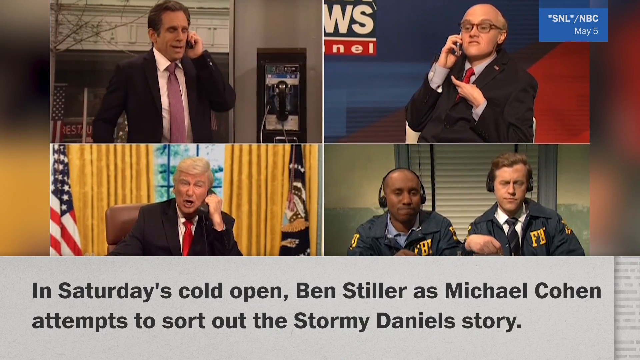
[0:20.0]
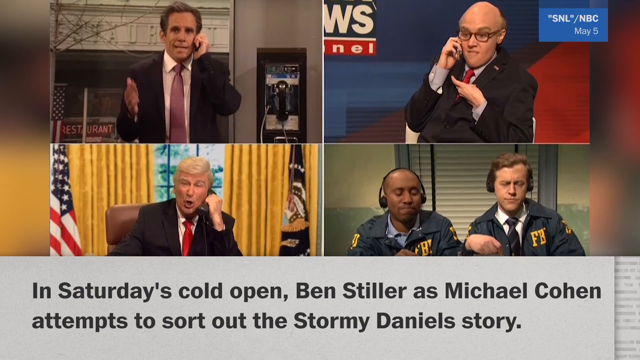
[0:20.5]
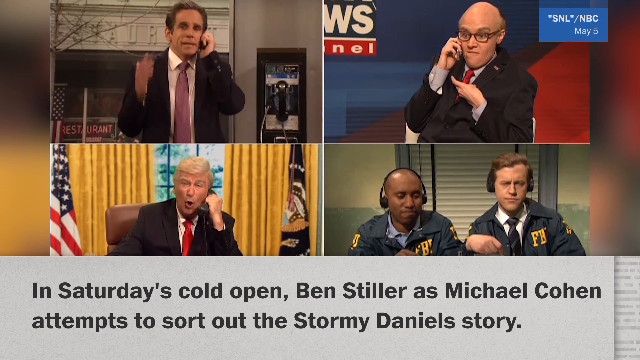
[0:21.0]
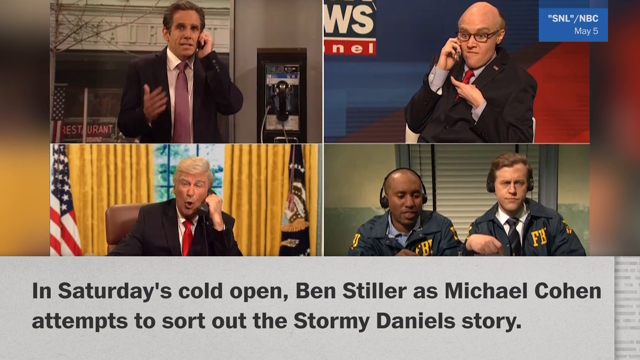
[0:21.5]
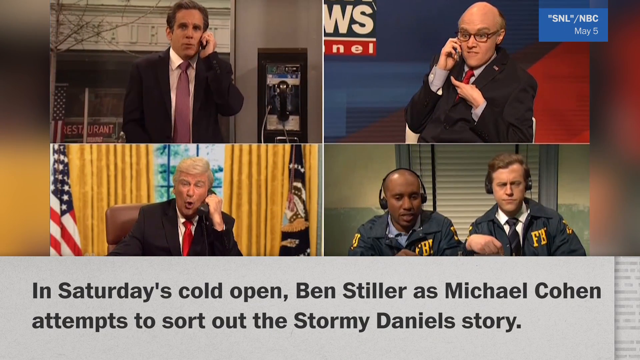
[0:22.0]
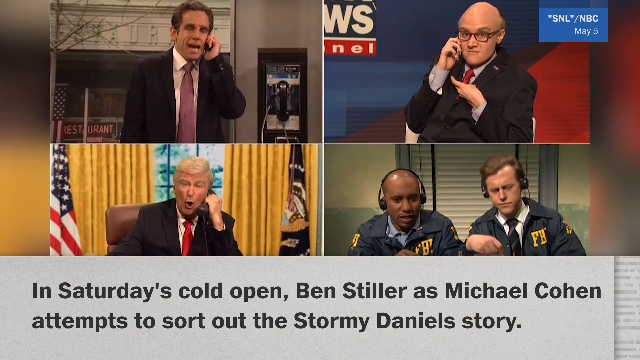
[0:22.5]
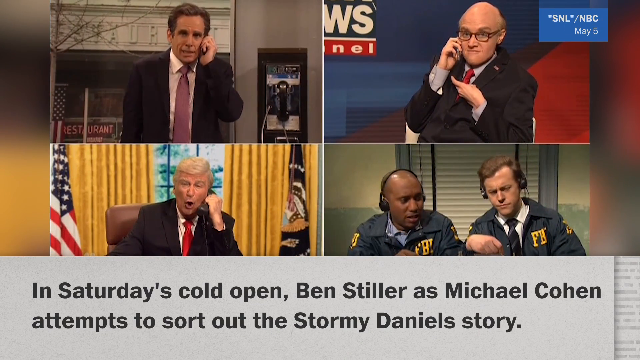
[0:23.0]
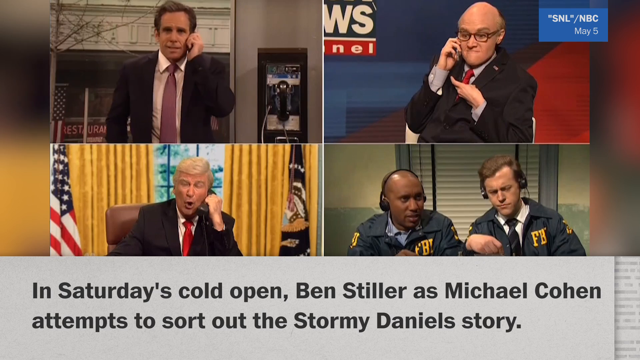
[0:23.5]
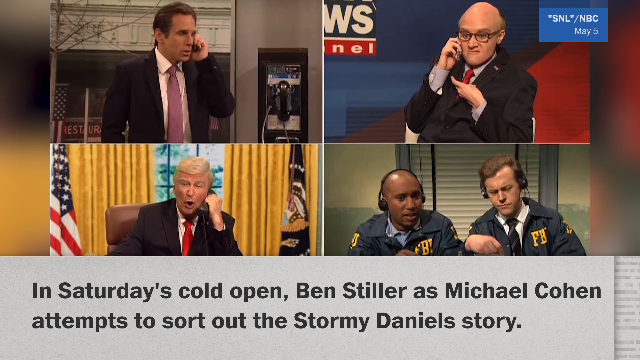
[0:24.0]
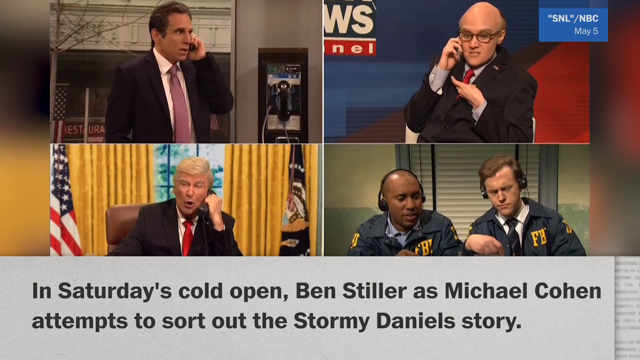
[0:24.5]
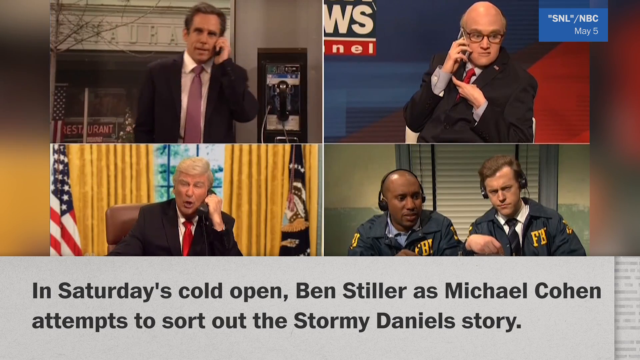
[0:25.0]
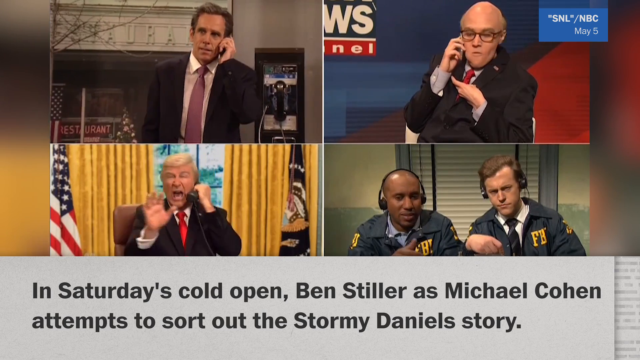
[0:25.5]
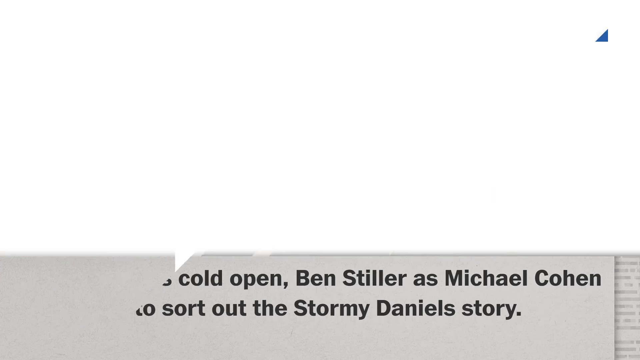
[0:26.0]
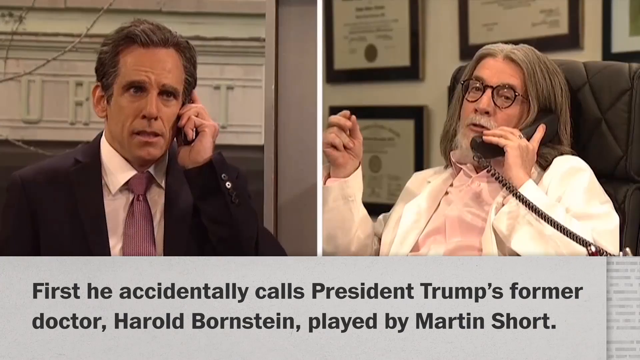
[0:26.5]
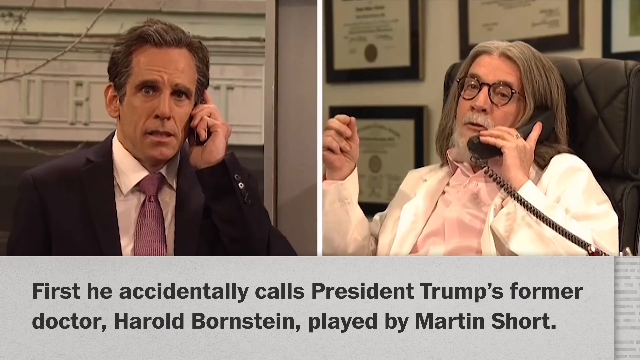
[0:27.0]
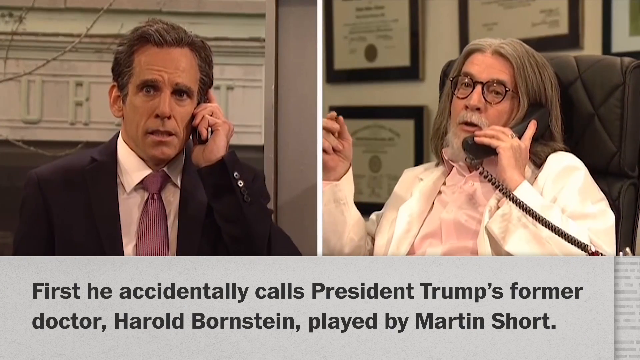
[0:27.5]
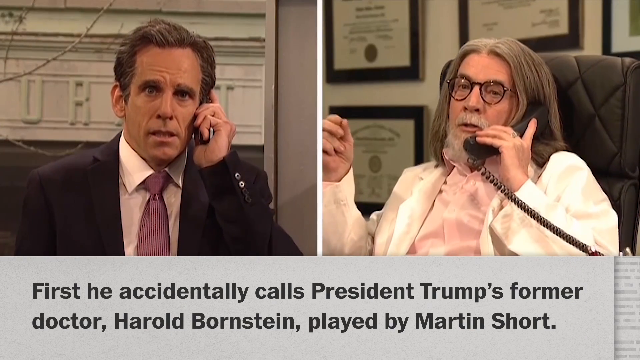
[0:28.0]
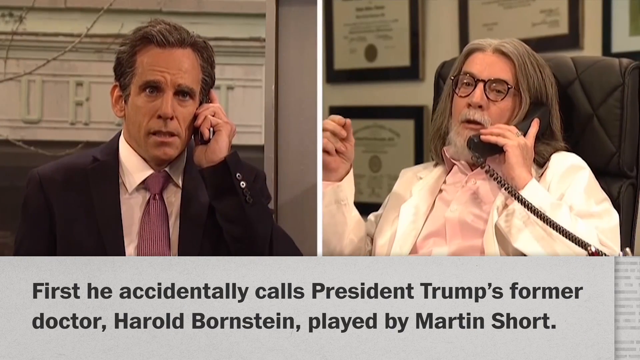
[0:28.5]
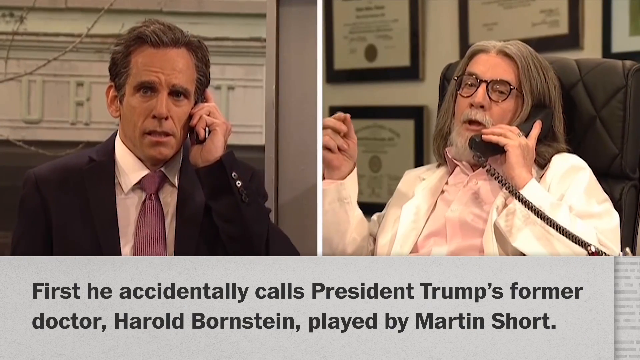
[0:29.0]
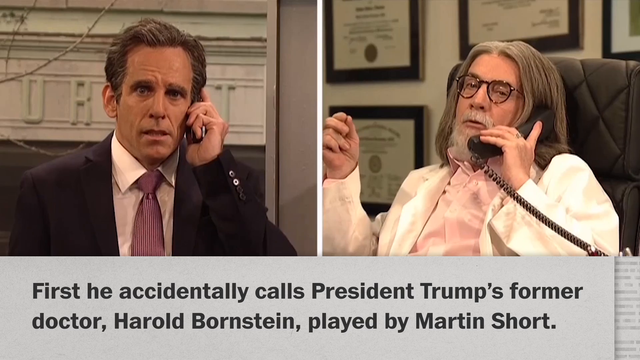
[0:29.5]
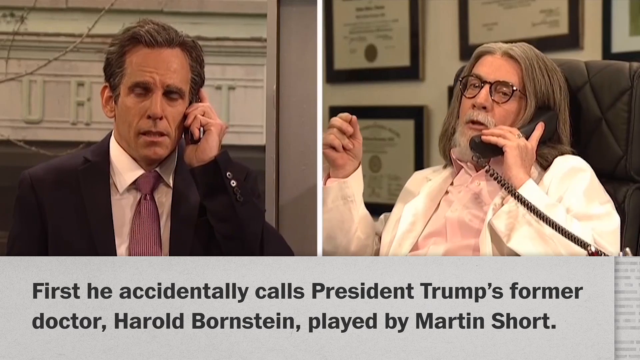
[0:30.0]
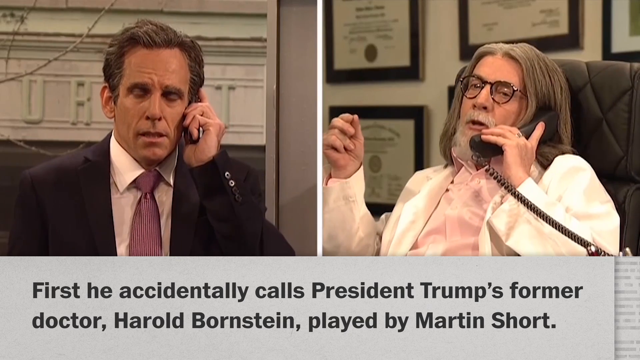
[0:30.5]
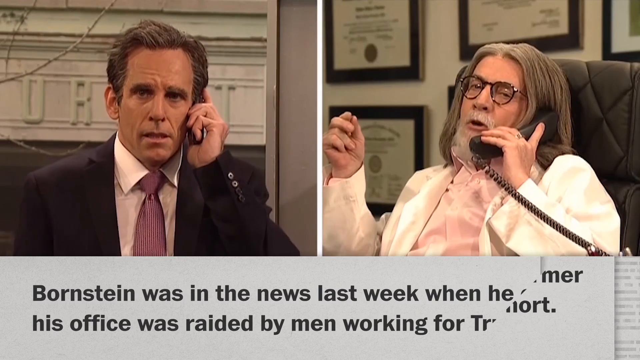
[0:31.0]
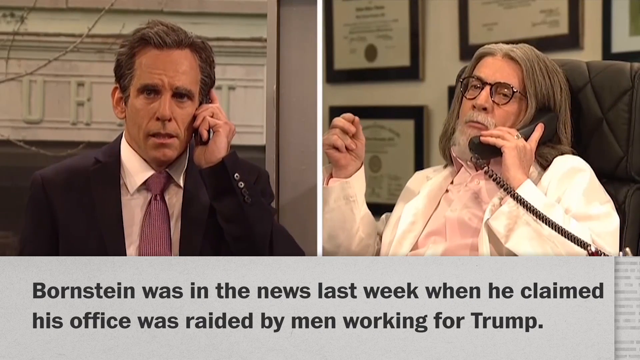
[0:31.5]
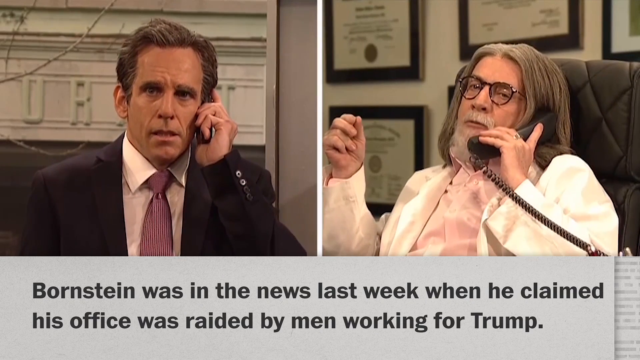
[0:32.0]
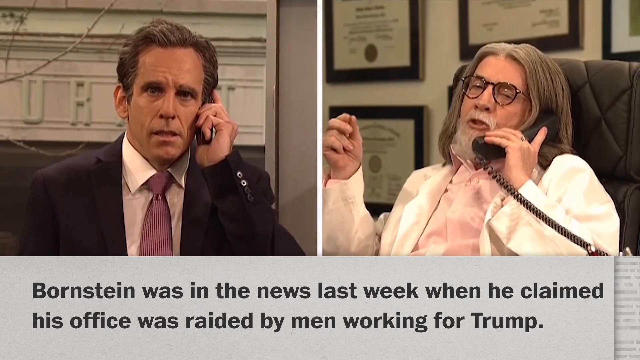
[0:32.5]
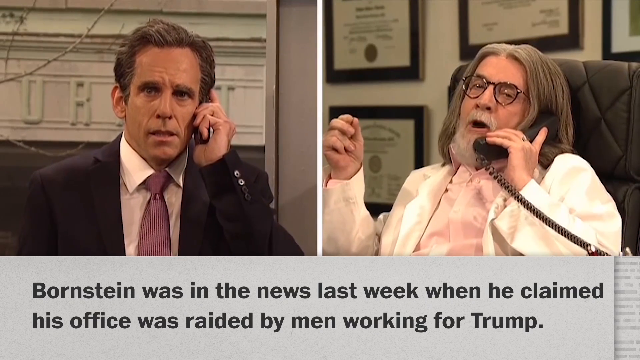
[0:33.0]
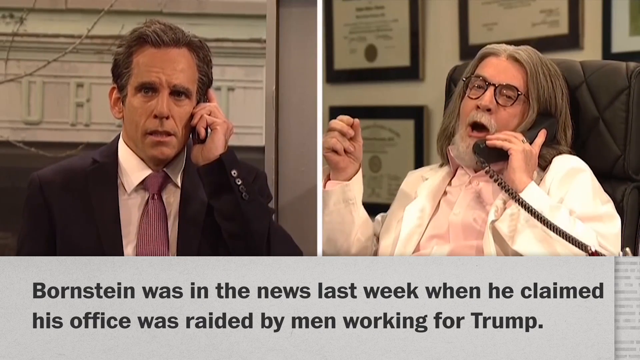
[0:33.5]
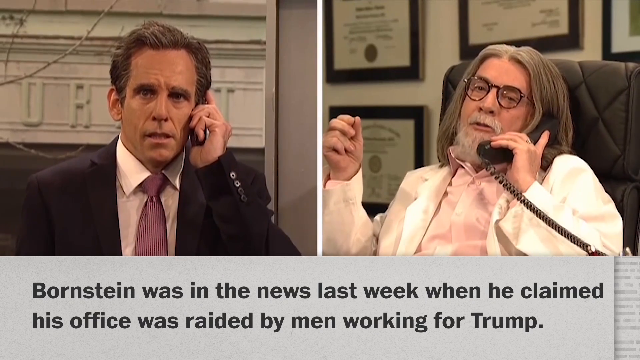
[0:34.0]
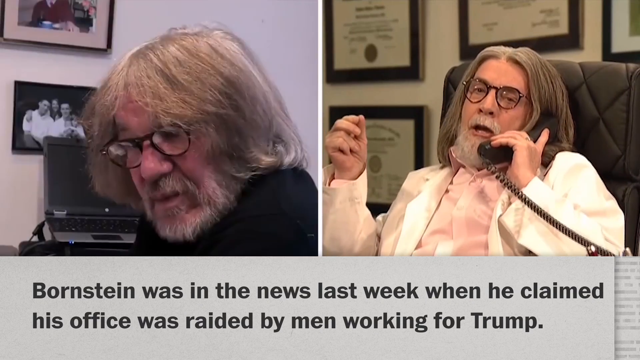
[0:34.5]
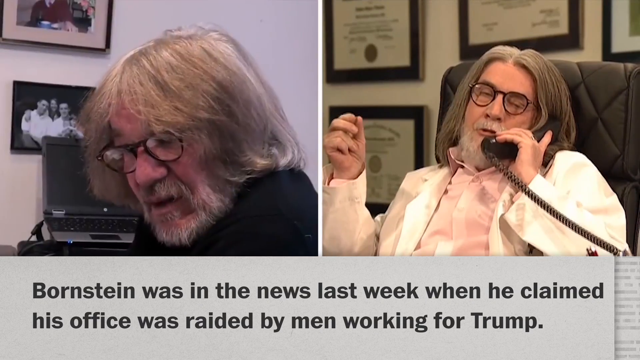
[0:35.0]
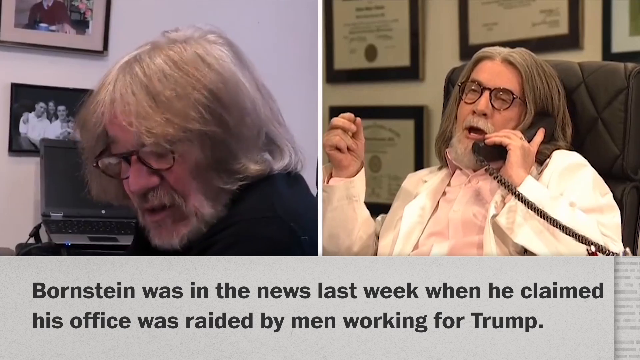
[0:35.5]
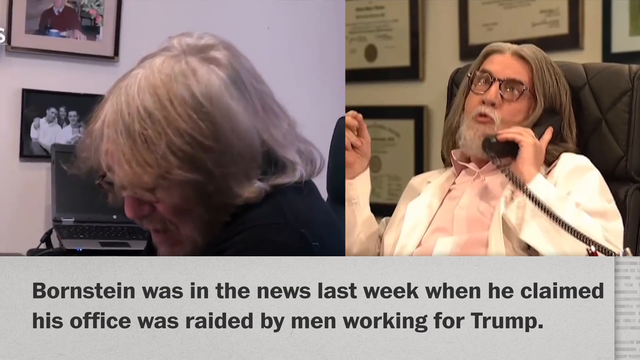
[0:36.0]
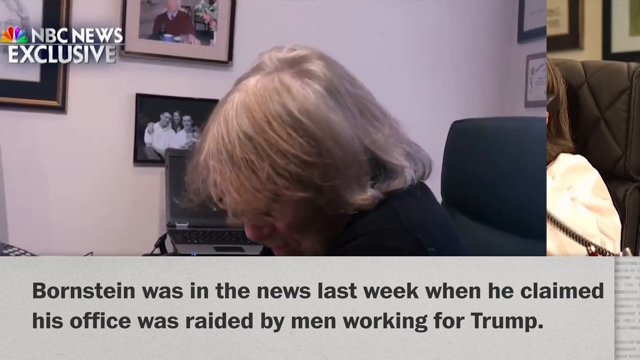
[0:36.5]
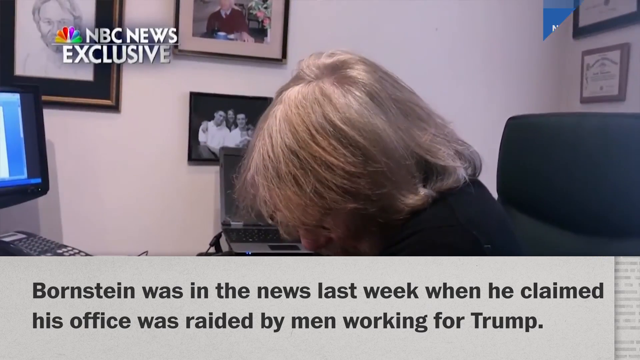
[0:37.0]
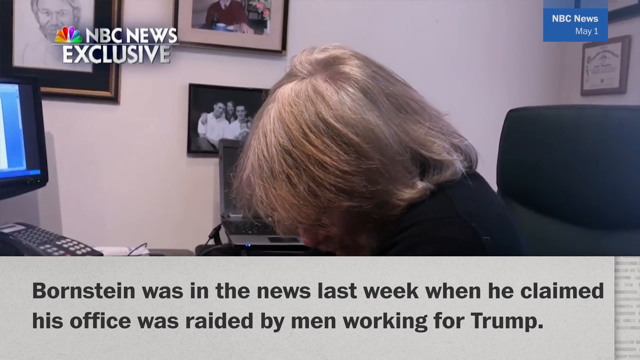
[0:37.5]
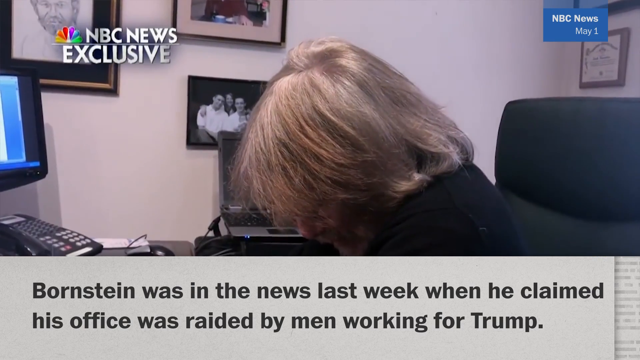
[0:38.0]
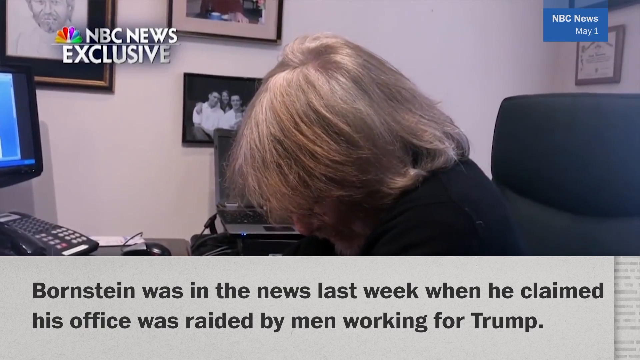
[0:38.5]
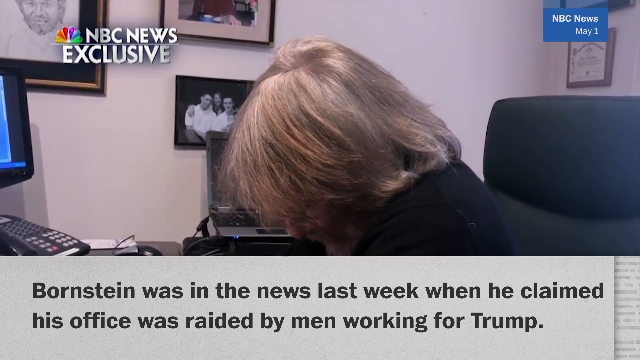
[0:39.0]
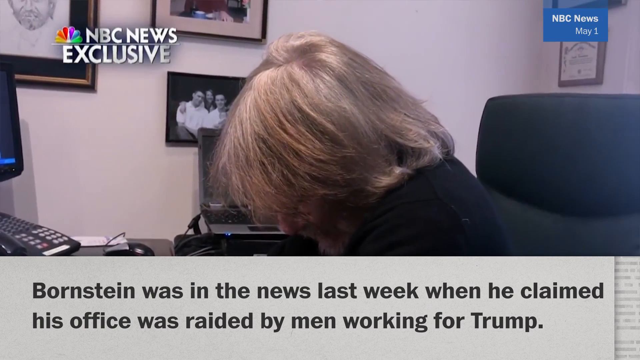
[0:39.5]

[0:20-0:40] A Saturday Night Live video shows the screen split four ways, with somebody playing Trump and another actor playing someone who could be Bornstein. "NBC exclusive" appears at the top, and small stories run along the bottom. Text reads "cold open Ben Stiller's Michael Cohen," identifying Ben Stiller as Michael Cohen. The view changes to a two-way split screen in which he speaks to a man with a beard and gray hair named Bornstein. Shortly after, the screen returns to four quadrants showing a news commentator, Ben Stiller, Alec Baldwin and the FBI guys, all continuing to talk on telephones. The words at the bottom are very hard to read: only one line is visible, the rest are hidden, and the text does not scroll. That line reads "first he actually called President Trump's."